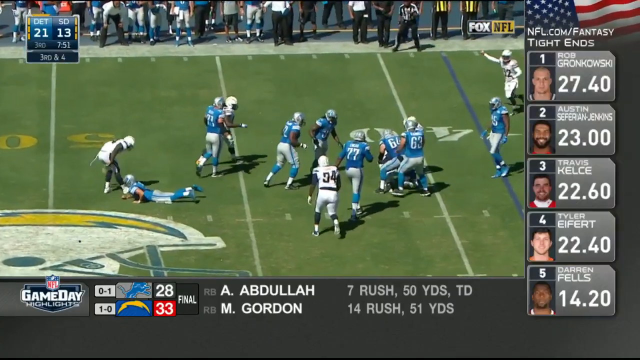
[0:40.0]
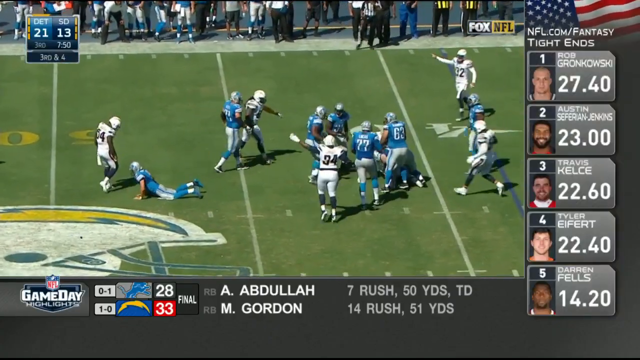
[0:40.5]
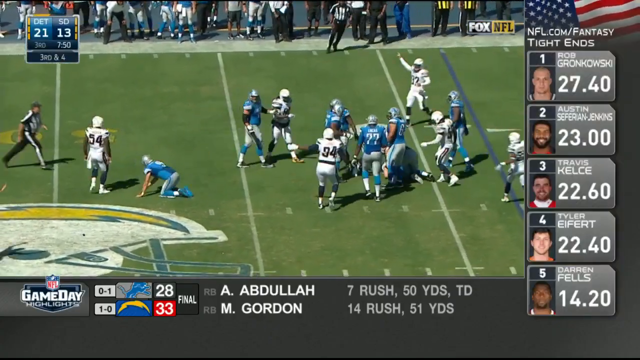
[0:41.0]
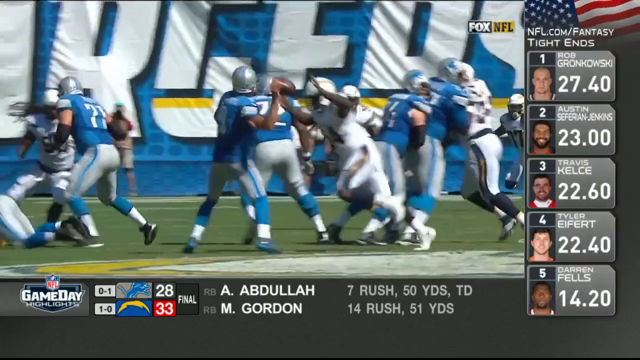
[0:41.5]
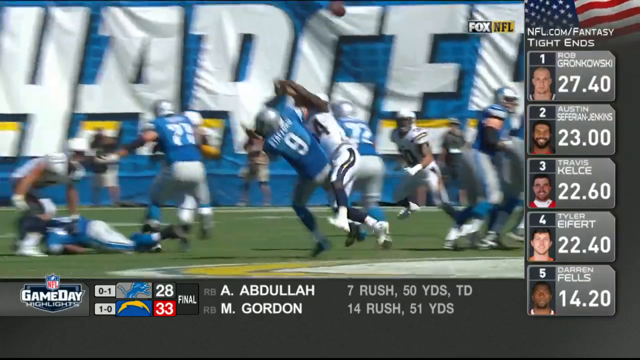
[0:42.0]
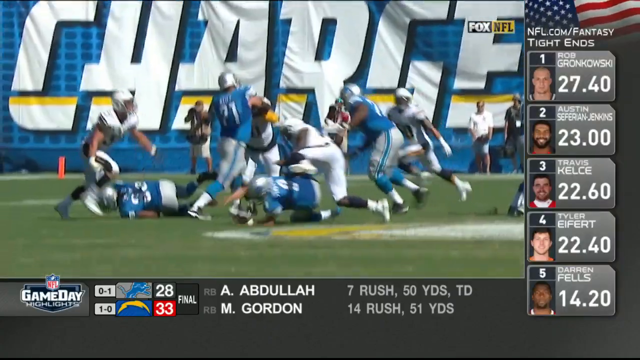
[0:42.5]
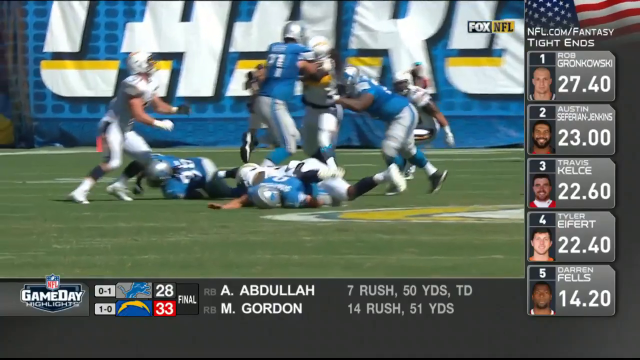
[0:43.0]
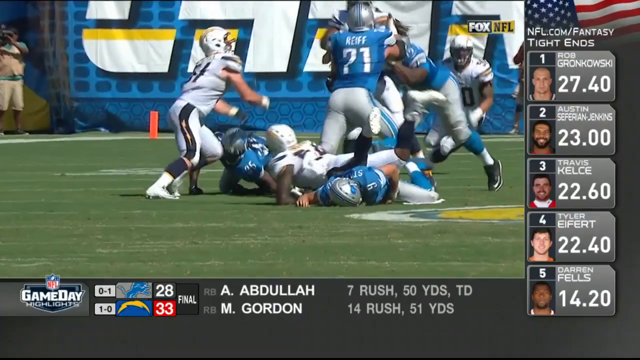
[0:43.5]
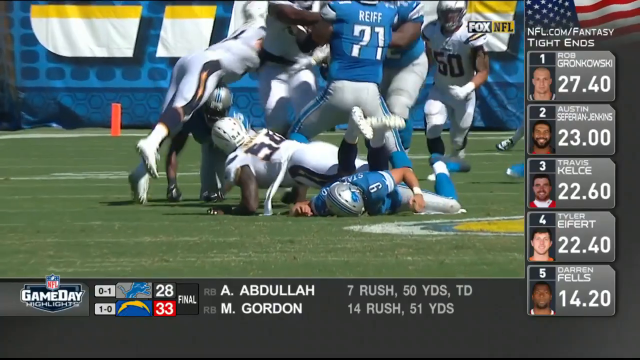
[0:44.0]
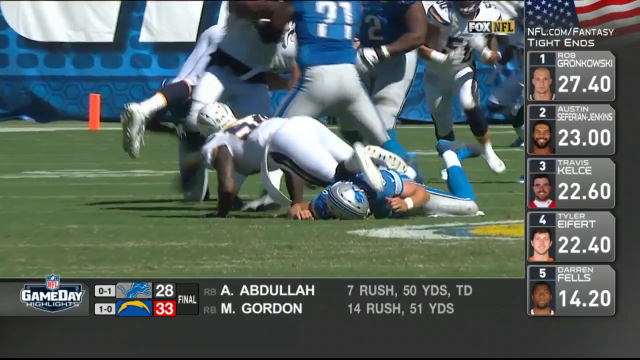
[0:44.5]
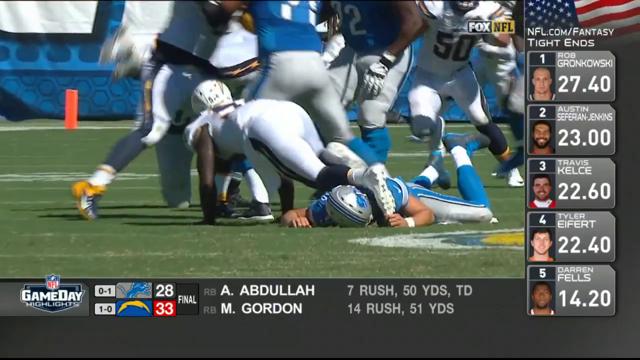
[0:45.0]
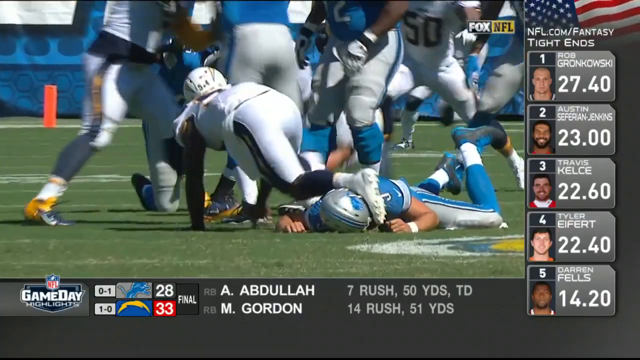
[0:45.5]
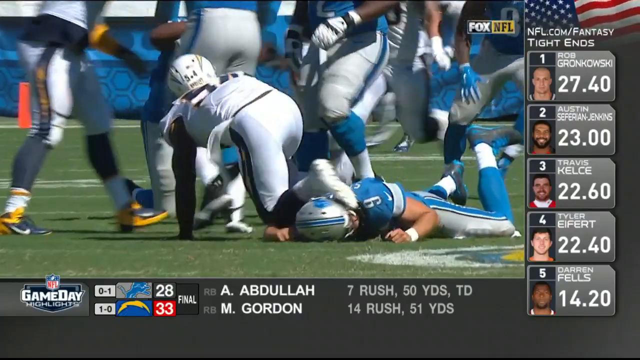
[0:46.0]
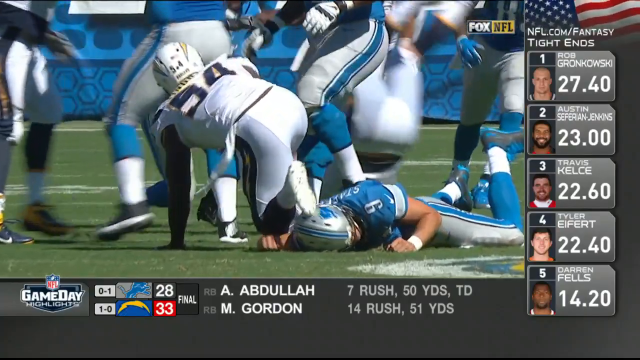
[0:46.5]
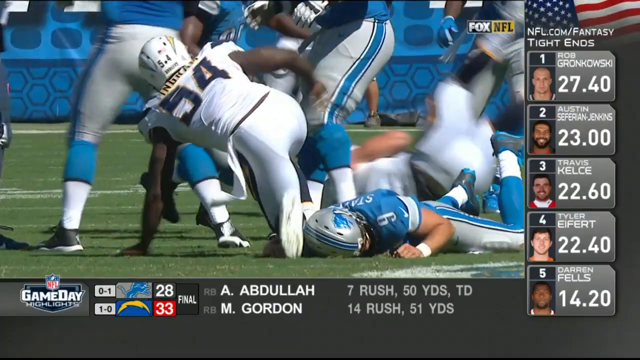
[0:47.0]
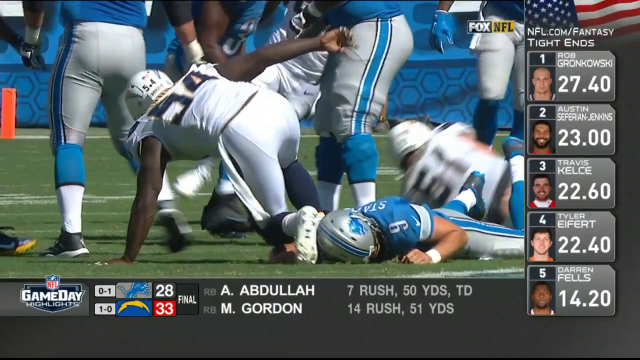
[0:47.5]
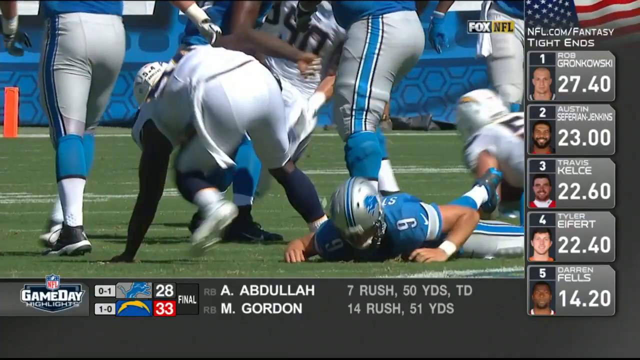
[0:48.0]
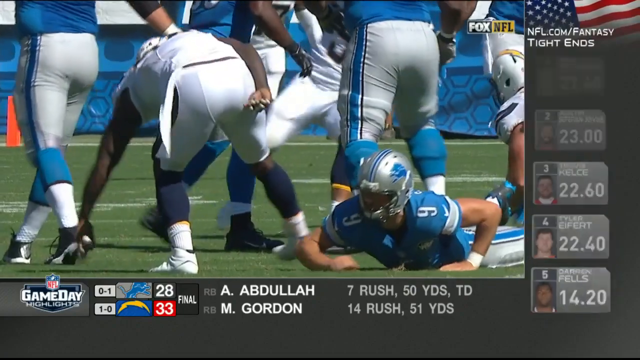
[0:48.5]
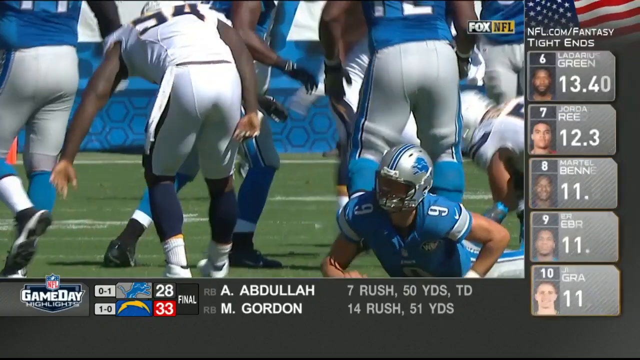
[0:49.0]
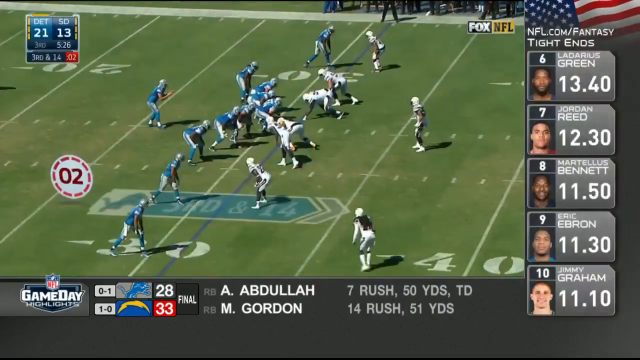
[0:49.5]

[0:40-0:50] An instant replay shows the sack in slow motion and close up, focusing mostly on the quarterback and the man who sacks him. As he makes the sack he sort of lands on the quarterback's legs and lets his feet drag across the quarterback's helmet, while the quarterback lies on his stomach. The player in the white uniform gets up. A new play follows with the blue team on the left; the snap apparently happens and the quarterback gets the ball. The graphics with scores remain along the bottom, the fantasy players are still listed on the right, and the score at the bottom appears to read Lions 28, Chargers 33.